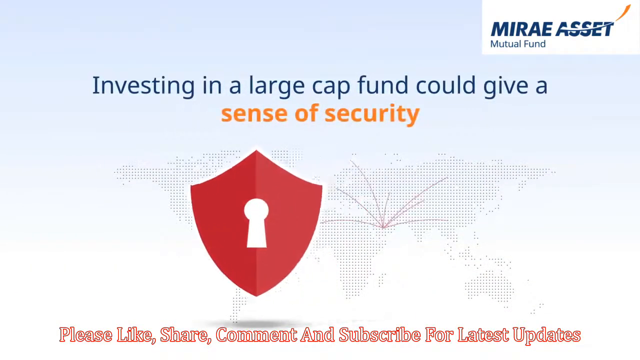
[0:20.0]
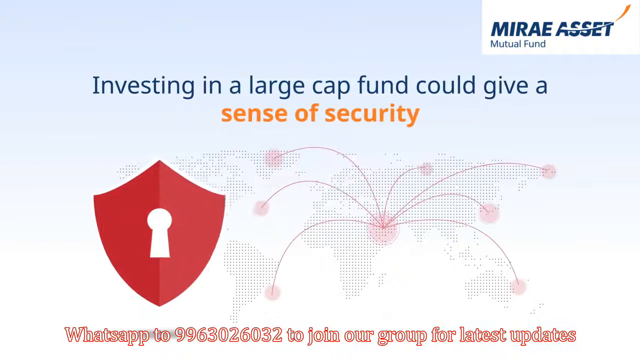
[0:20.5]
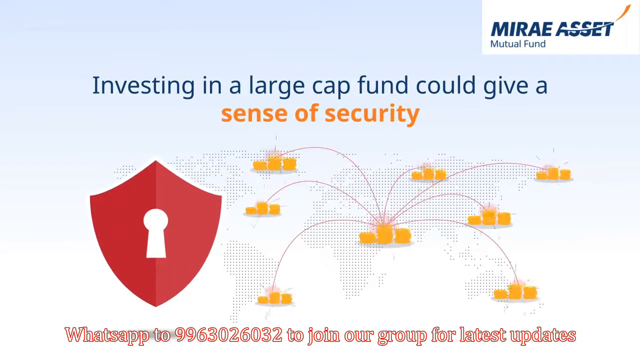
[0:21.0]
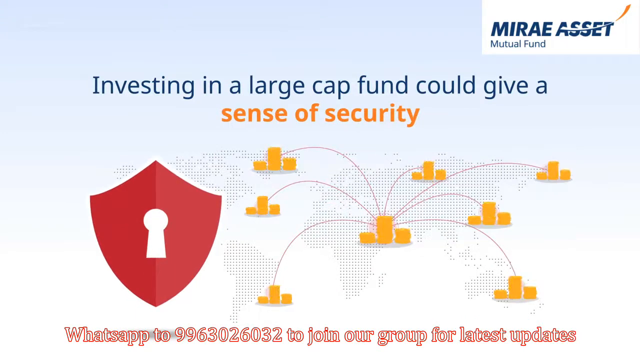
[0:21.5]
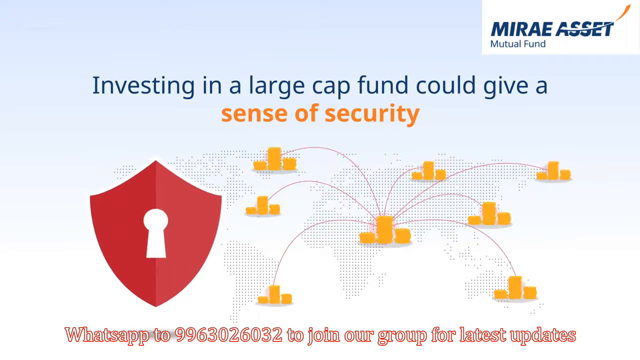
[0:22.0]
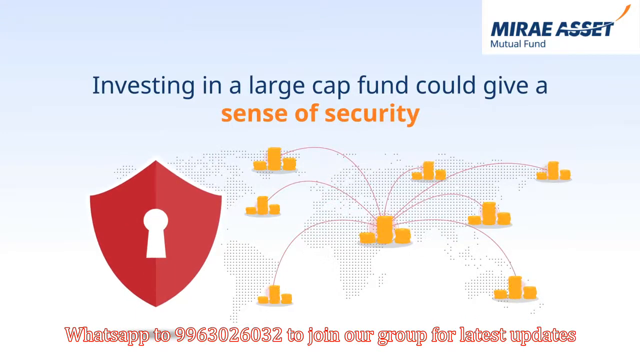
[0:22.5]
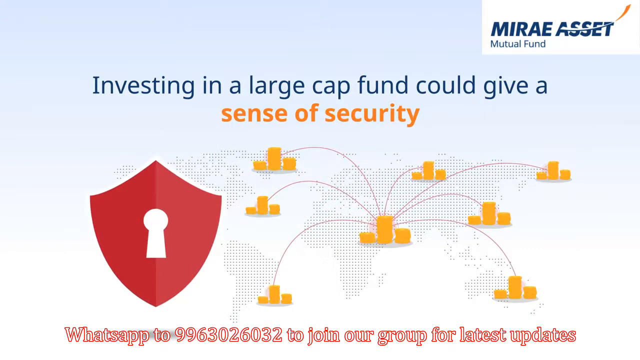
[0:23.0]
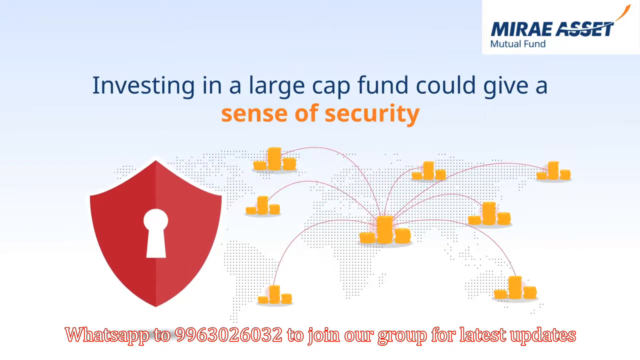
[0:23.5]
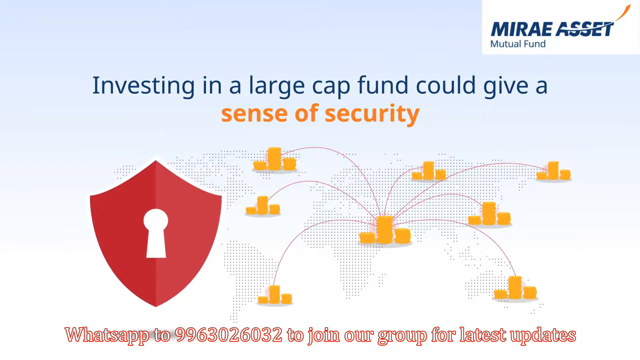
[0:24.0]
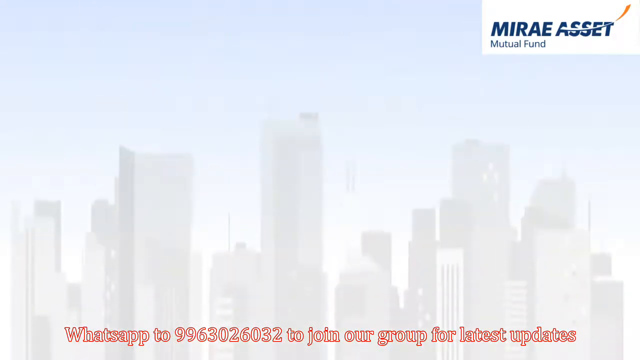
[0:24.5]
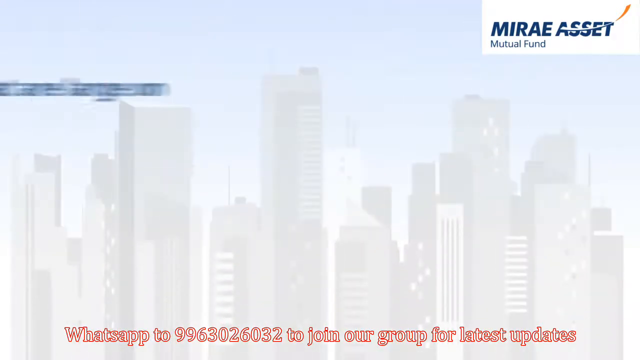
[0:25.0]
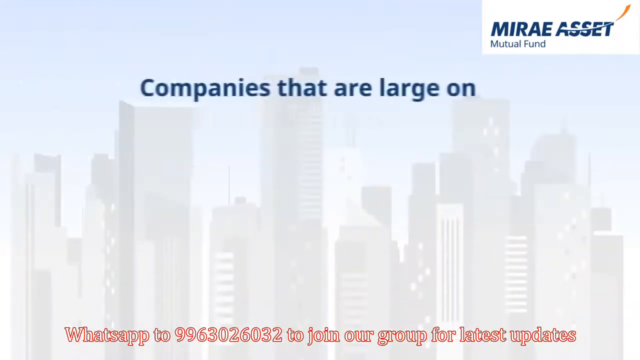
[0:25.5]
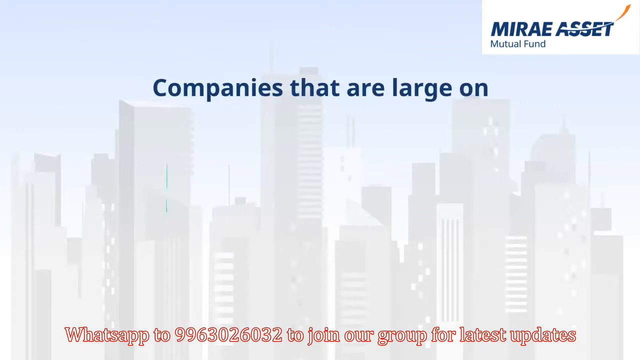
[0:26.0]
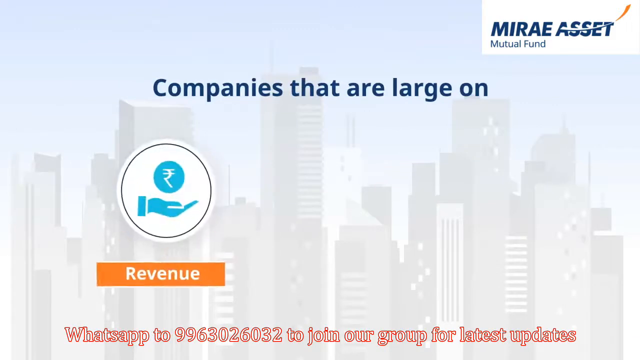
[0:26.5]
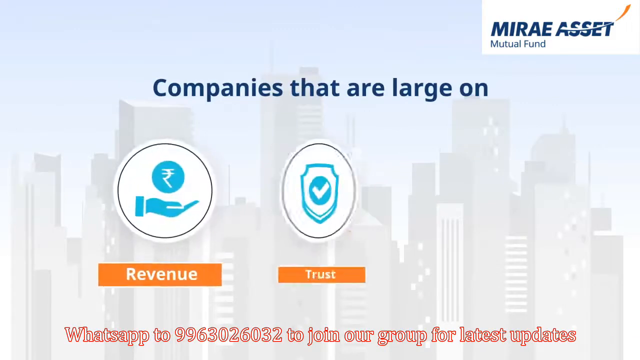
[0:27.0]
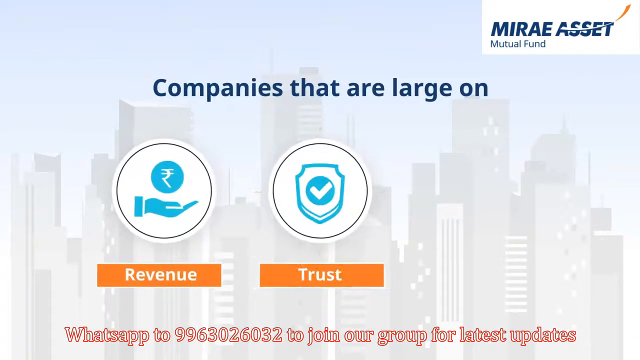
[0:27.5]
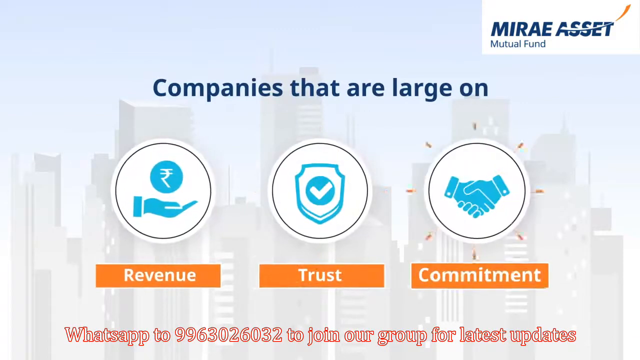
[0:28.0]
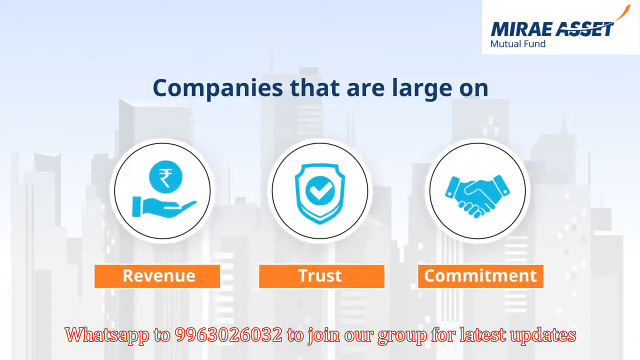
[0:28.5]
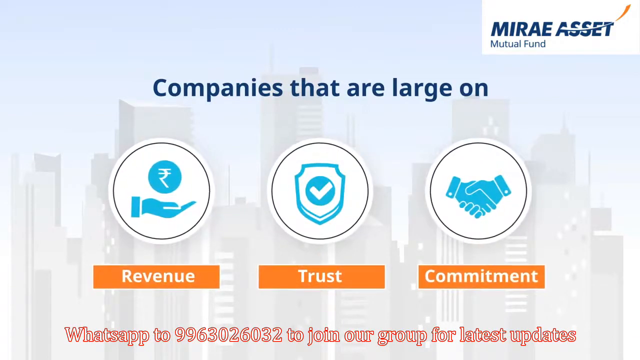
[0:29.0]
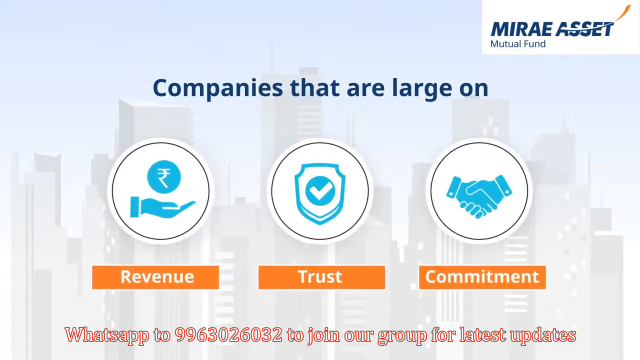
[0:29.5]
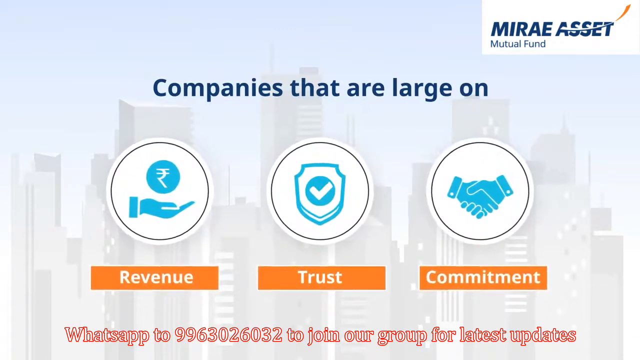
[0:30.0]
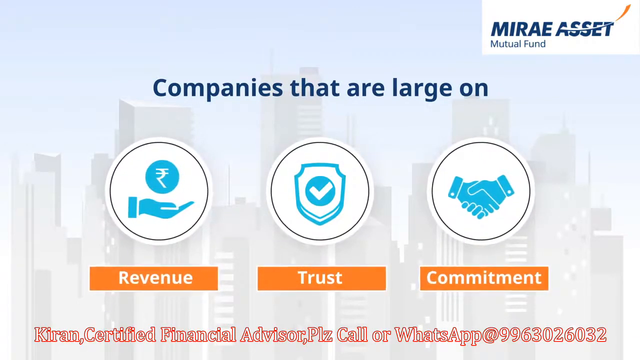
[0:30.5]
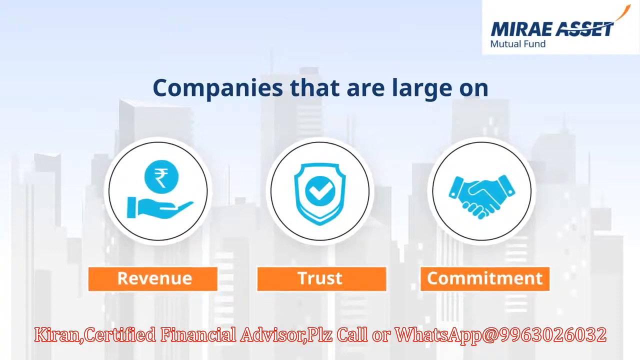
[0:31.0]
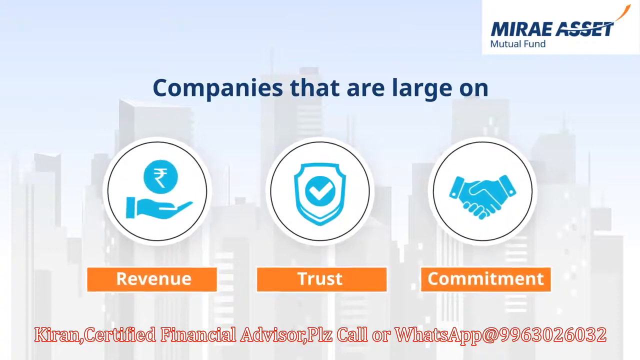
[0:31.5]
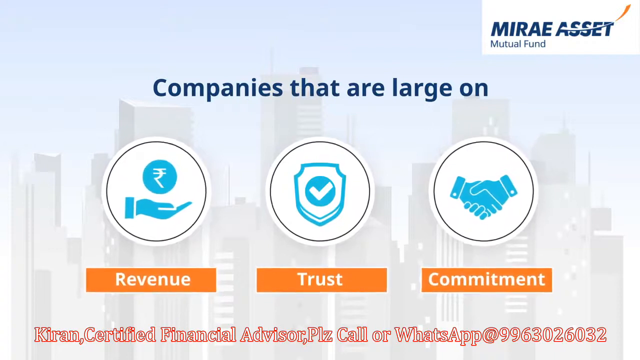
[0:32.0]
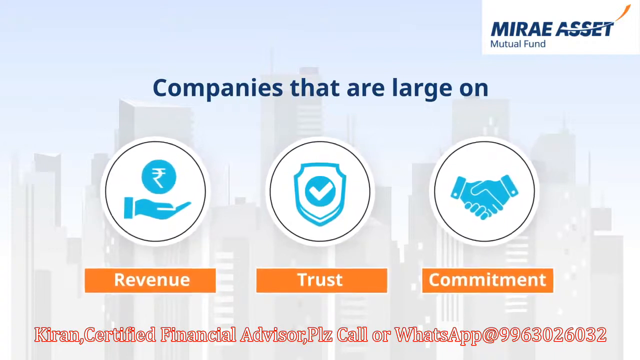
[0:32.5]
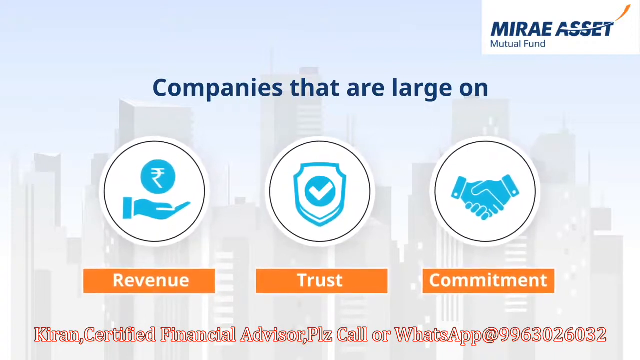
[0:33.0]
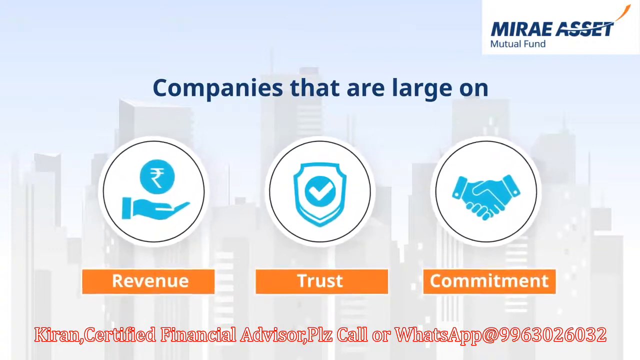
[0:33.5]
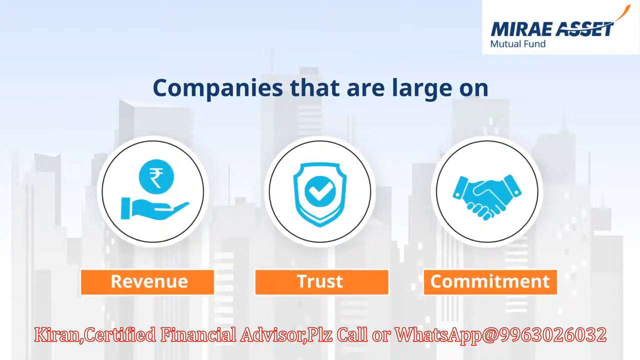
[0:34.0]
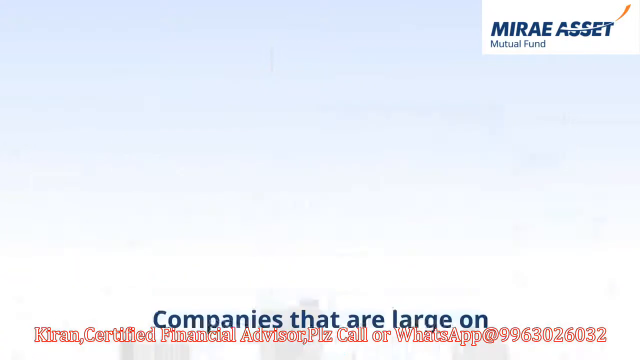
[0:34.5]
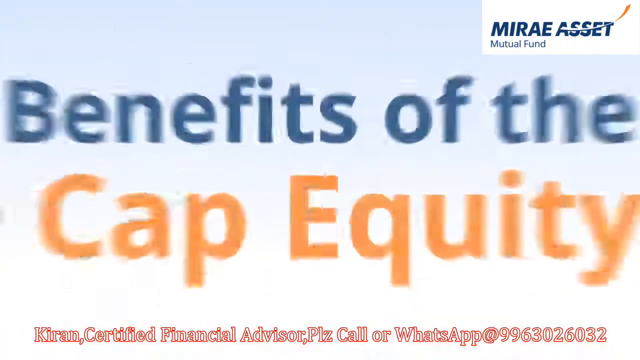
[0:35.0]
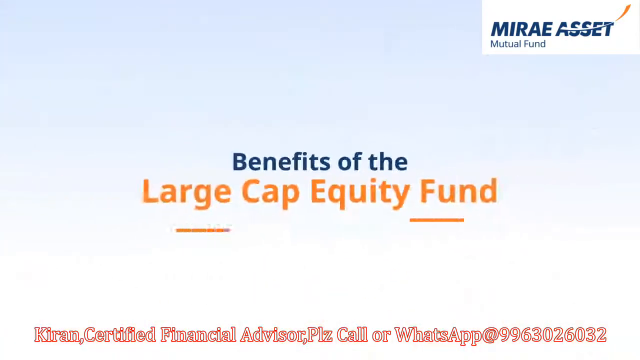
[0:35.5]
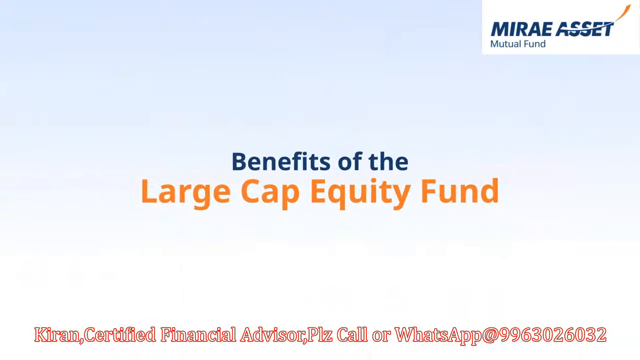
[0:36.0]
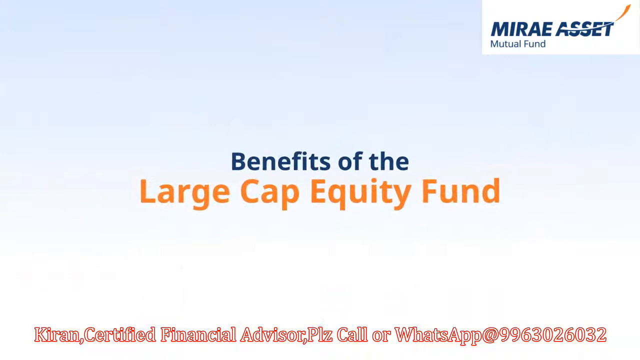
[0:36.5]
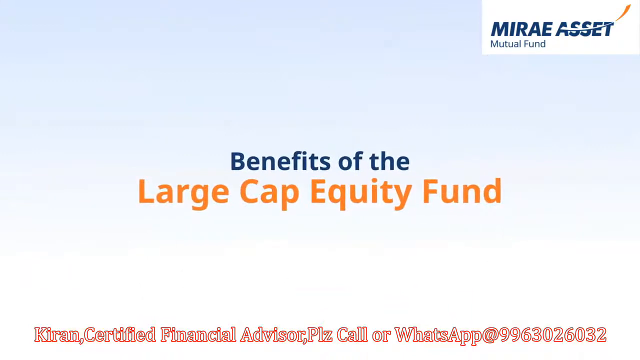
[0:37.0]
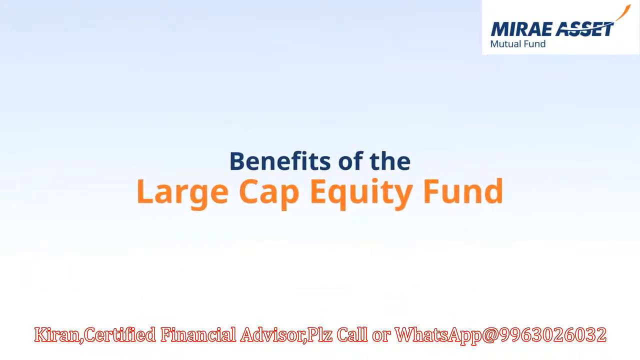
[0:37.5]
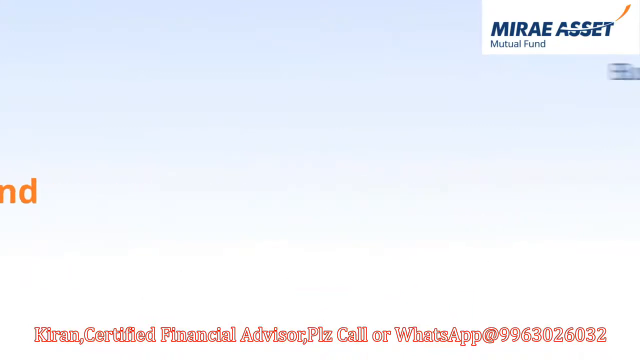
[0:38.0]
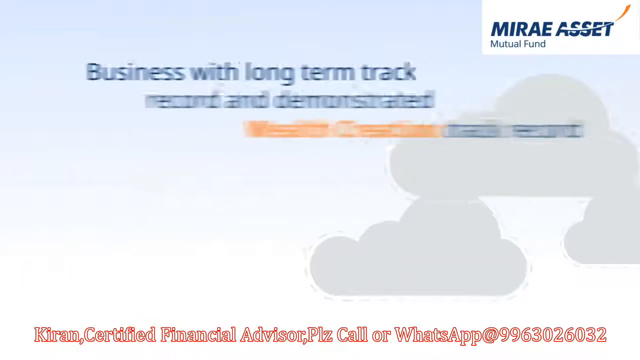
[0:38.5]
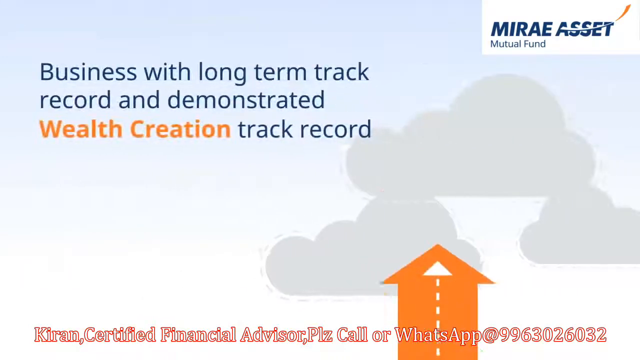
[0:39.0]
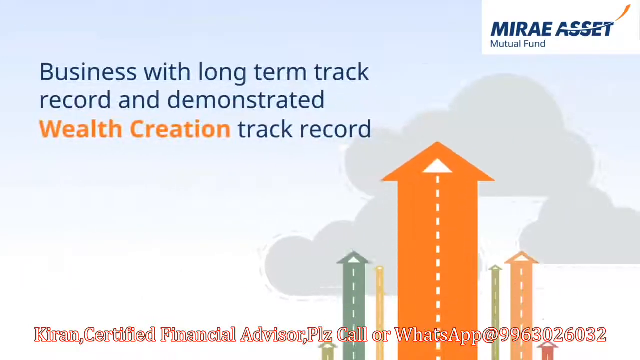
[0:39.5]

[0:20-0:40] The screen reading "investing in a large cap fund could give you a sense of security" is shown, with "sense of security" in orange lettering and the rest in blue. The Mirae Asset Mutual Fund logo is in the top right-hand corner, and very faintly in the background are dots of what appears to be a world map, with branches webbing out from somewhere to the right of Africa. A WhatsApp logo is at the bottom with a phone number listed. The next screen reads "companies that are large on", and below it an icon appears with an orange banner reading "revenue" in white lettering and a circular icon showing a blue hand over a ball of something; the white circular icon also appears to have little orange segments around its edge pointing out in the shape of a sun. Two more banners, "trust" and "commitment", pop up fairly quickly. The trust circle shows a check mark, and the last icon shows a handshake.